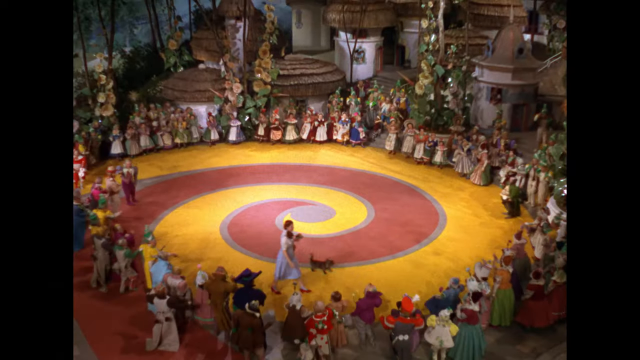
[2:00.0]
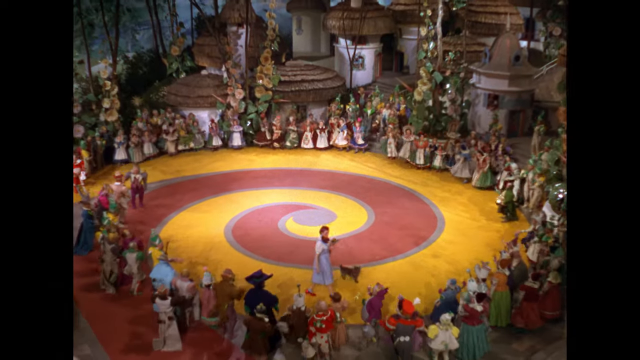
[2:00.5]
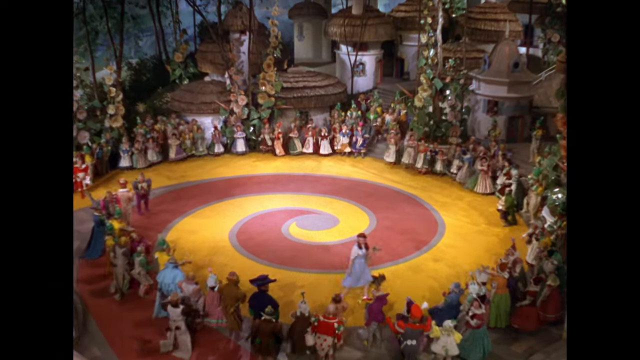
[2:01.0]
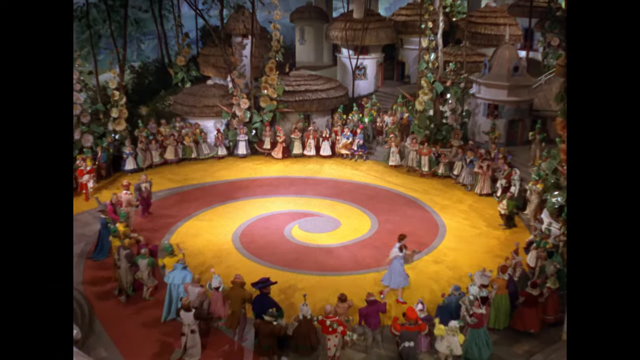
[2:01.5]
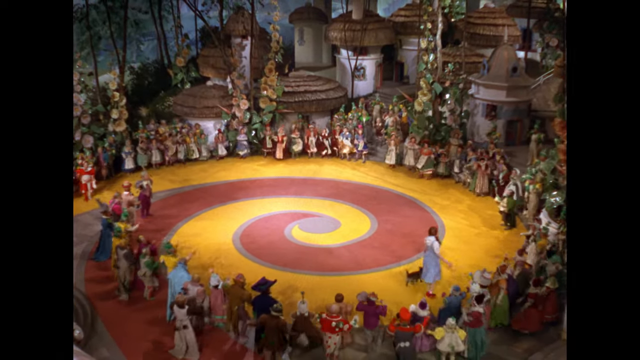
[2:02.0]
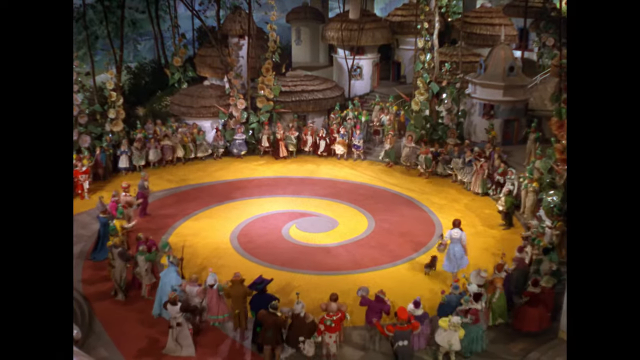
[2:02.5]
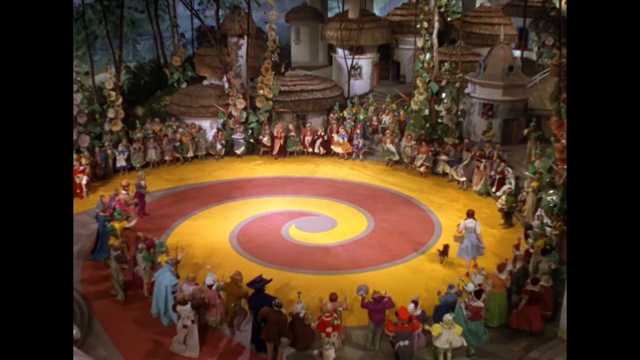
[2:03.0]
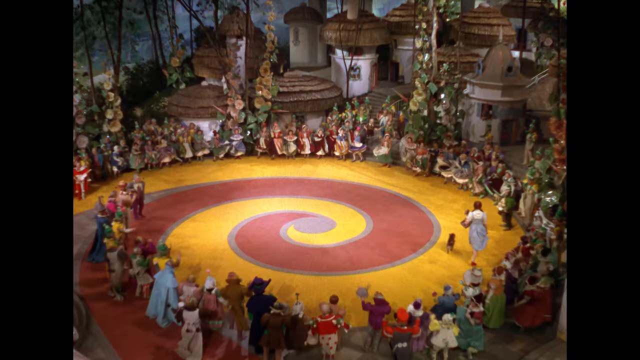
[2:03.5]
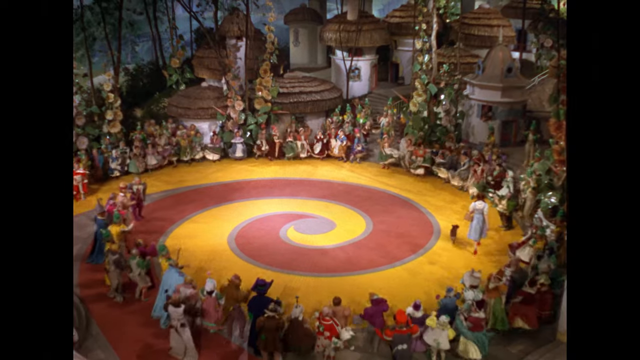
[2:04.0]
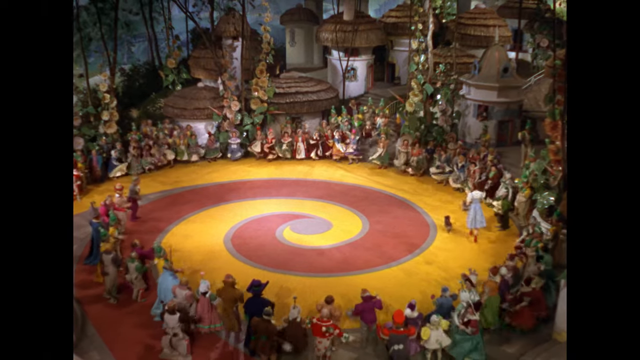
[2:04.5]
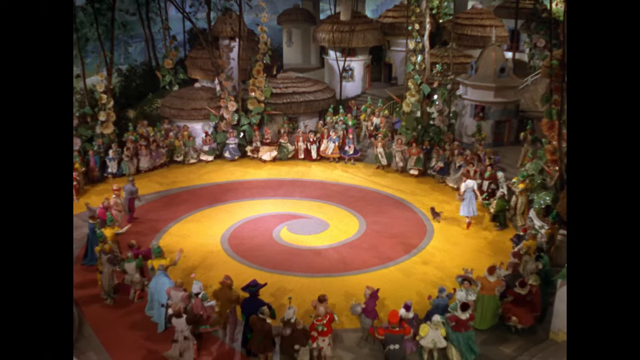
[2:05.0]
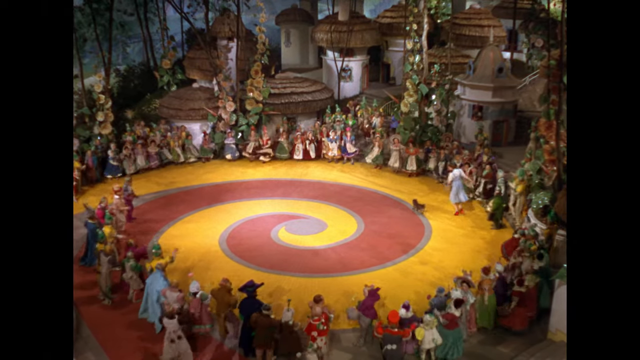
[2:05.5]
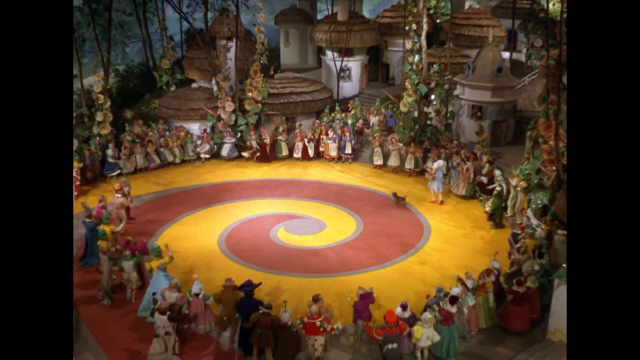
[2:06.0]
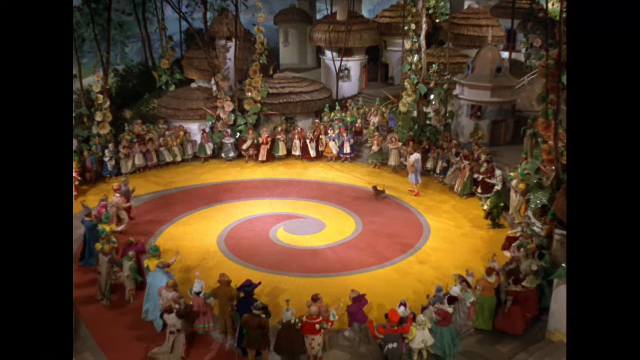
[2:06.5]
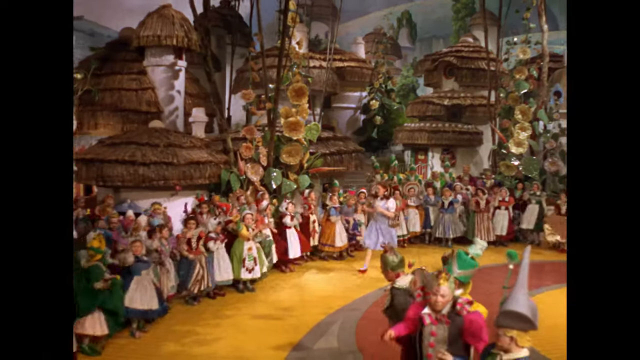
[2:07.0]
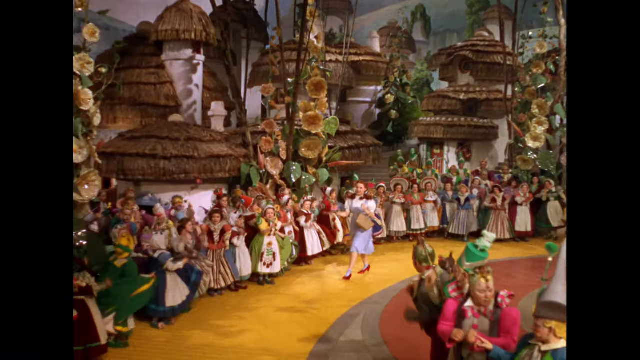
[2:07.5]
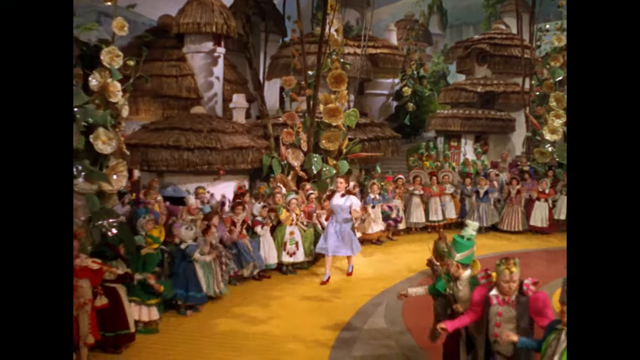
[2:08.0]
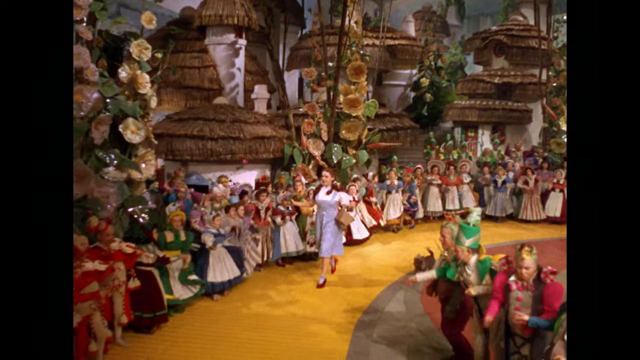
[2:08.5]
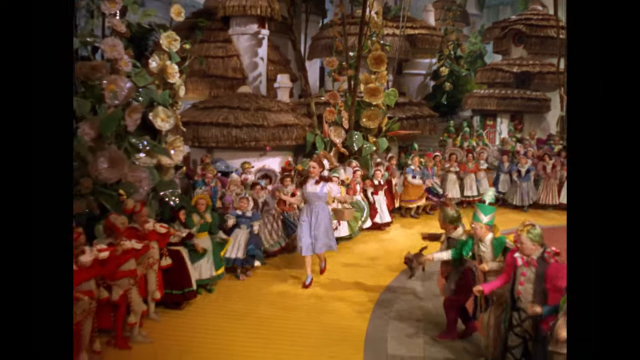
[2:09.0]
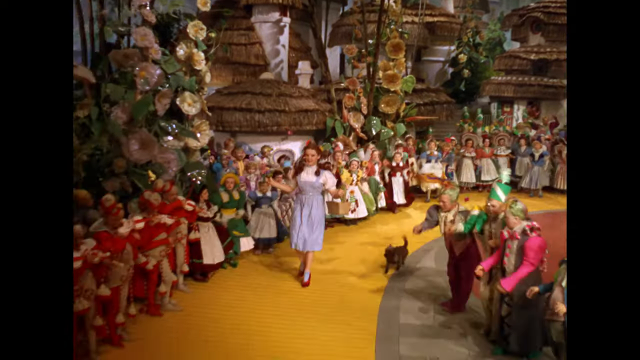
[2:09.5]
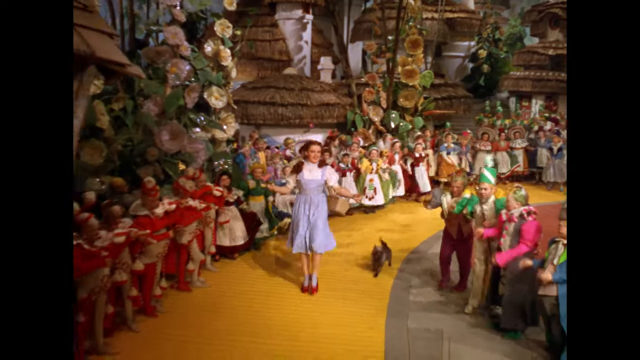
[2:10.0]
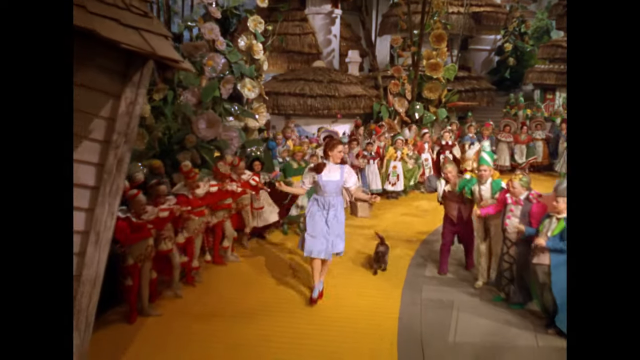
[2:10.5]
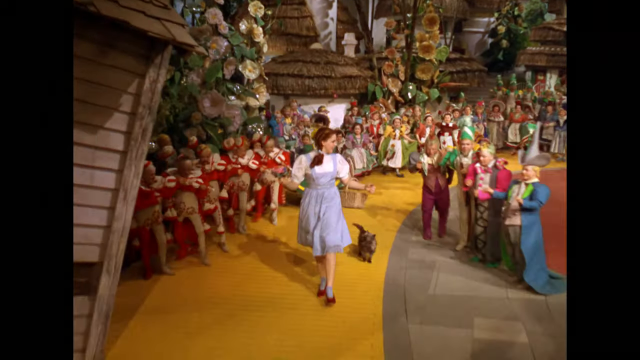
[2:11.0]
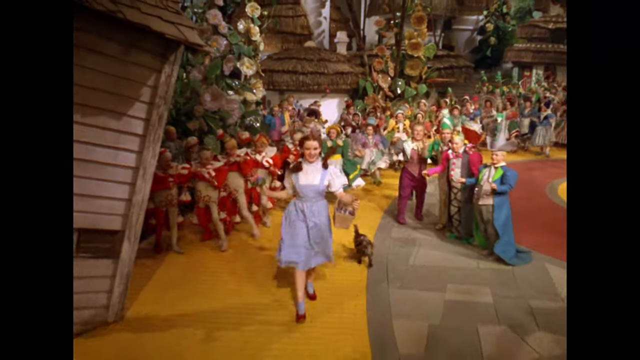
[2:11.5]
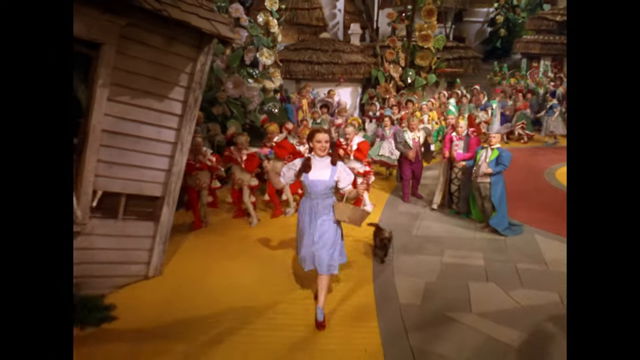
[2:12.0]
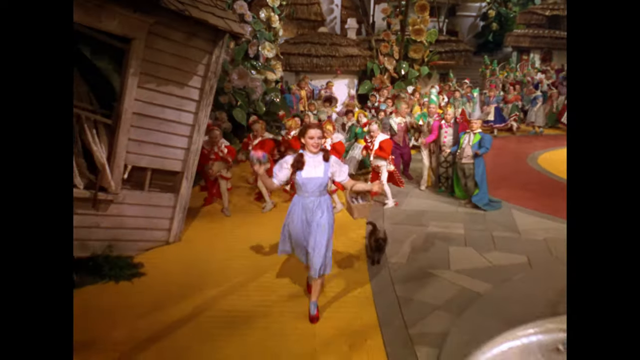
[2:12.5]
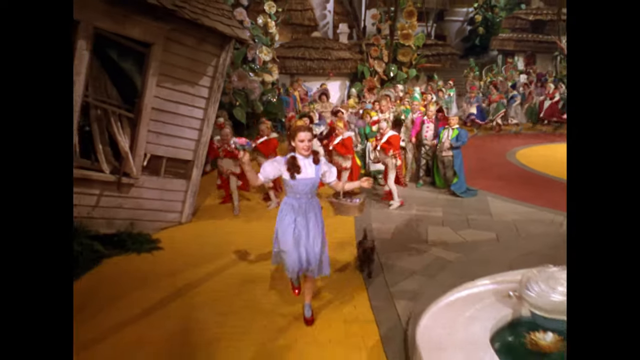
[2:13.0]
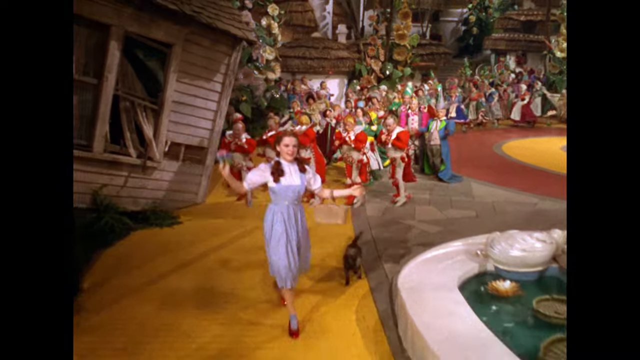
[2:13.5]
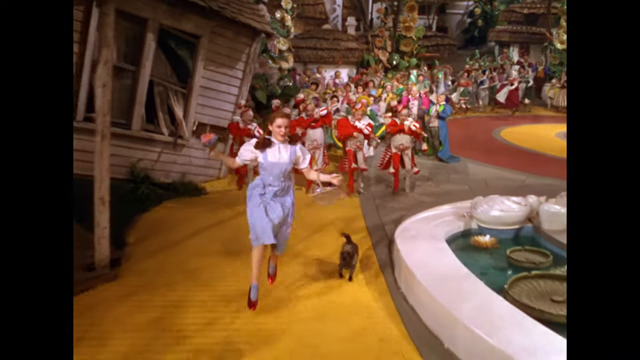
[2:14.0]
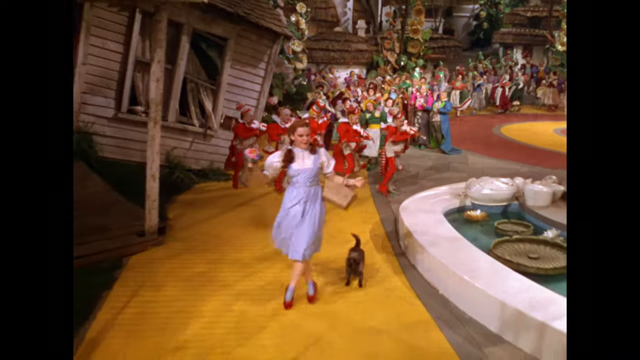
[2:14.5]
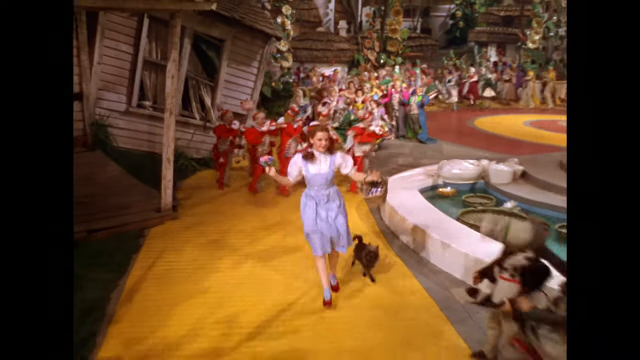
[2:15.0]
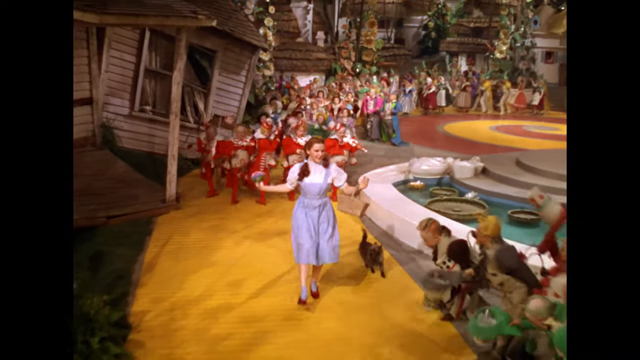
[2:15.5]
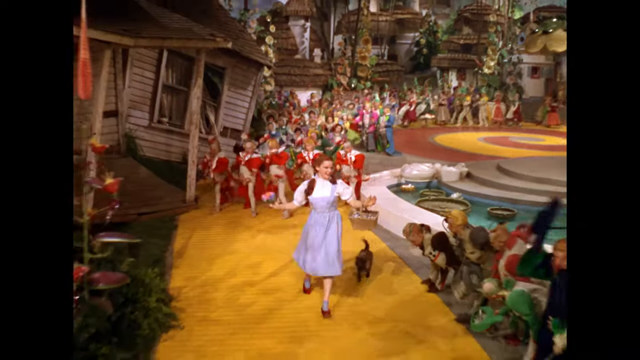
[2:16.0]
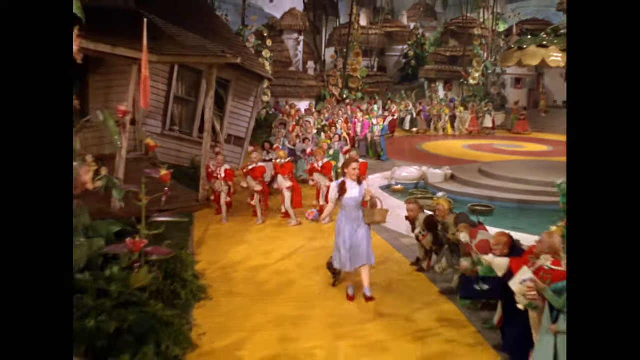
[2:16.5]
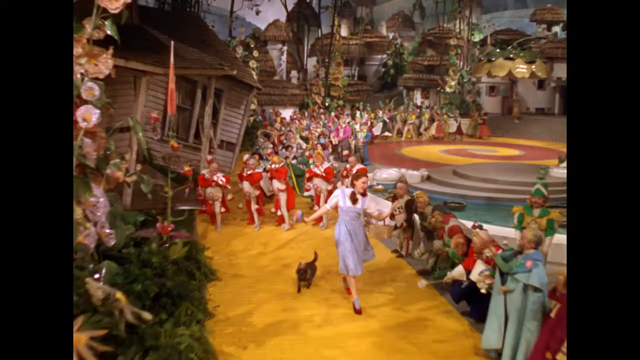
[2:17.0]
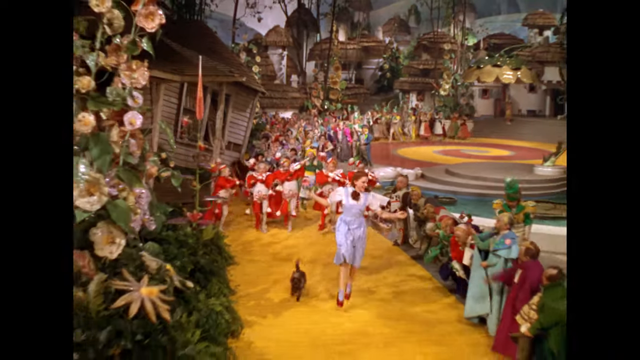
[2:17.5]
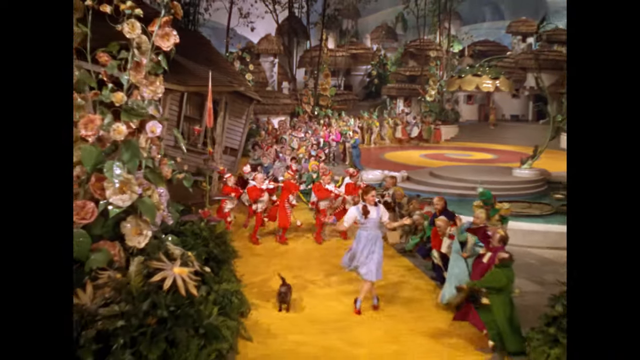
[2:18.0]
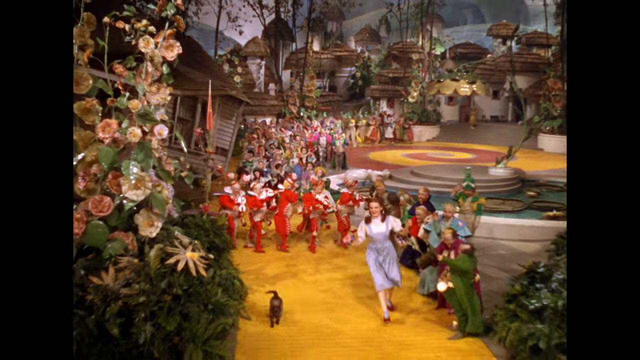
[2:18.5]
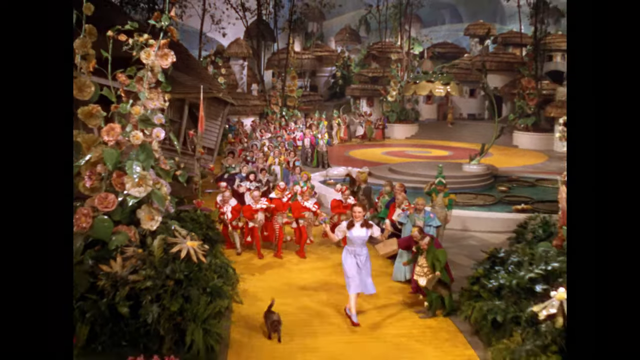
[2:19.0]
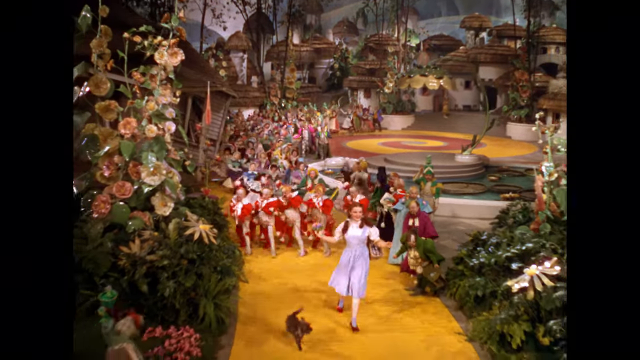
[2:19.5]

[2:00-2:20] An aerial view of the stage shows a large yellow spiraling road, with Dorothy in her blue and white checkered dress and white shirt walking on the yellow brick road as her small black terrier dog follows. All around the perimeter of the road and the stage, the small Munchkin people bounce up and down, dancing, and the women swing their dresses around. Another angle, in front of Dorothy, shows her skipping down the yellow brick road. A group of munchkins in red jackets begins following her, bouncing and skipping down the road, and more munchkins follow them, so that Dorothy skips down the road with her dog following and a large group of munchkins dancing and skipping behind her.